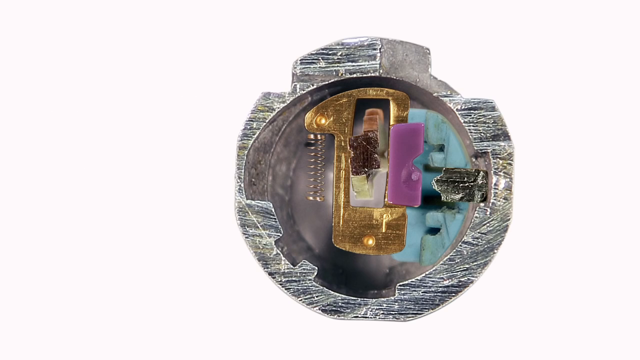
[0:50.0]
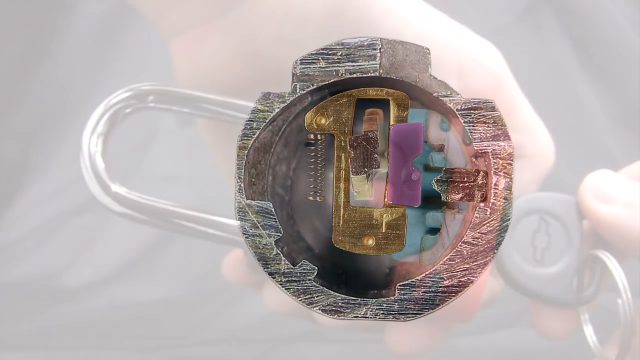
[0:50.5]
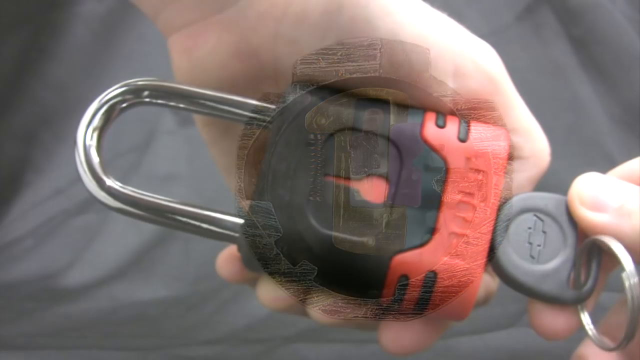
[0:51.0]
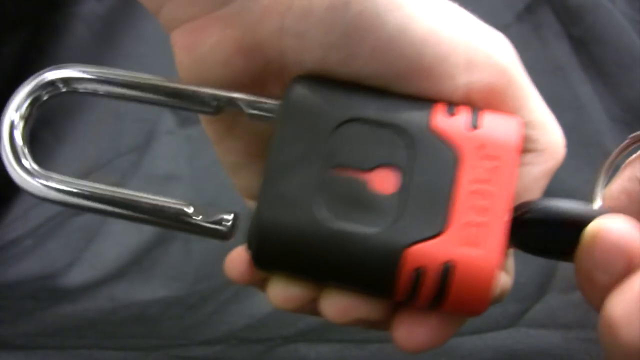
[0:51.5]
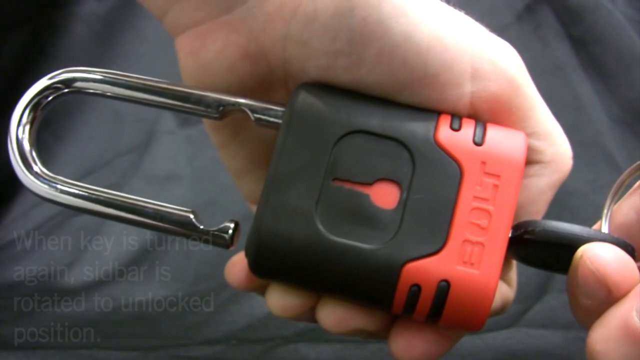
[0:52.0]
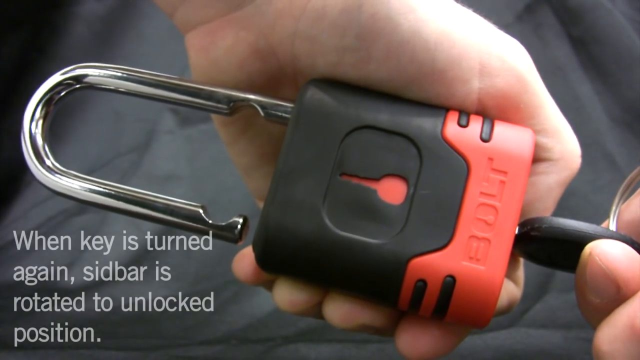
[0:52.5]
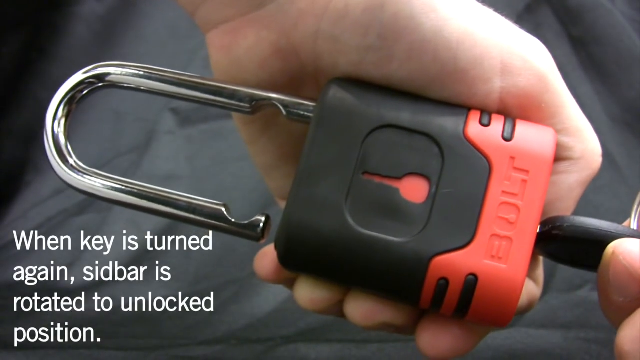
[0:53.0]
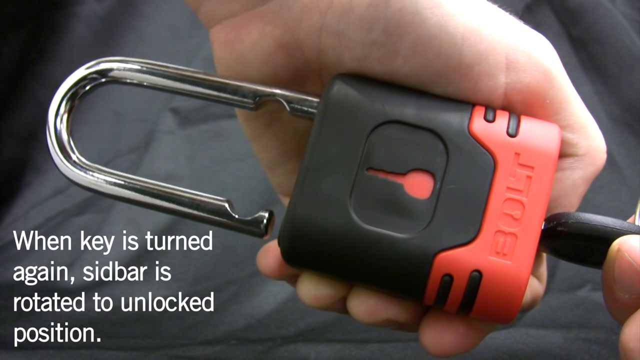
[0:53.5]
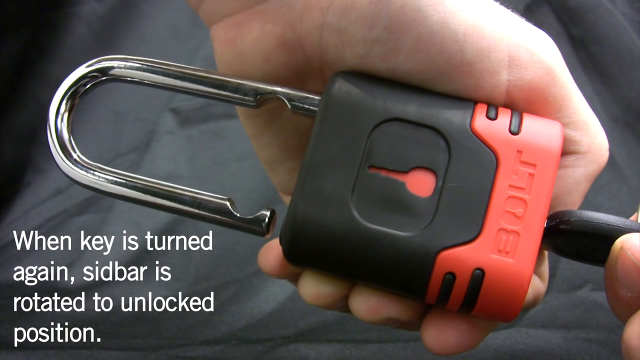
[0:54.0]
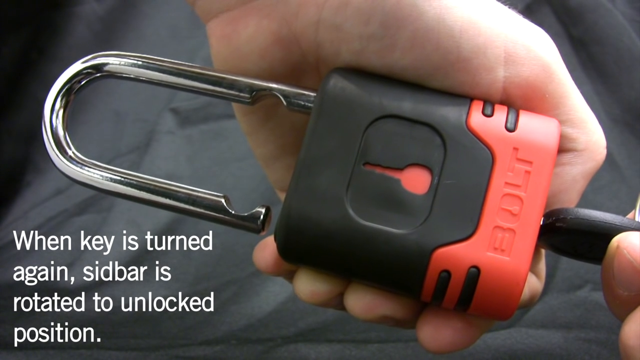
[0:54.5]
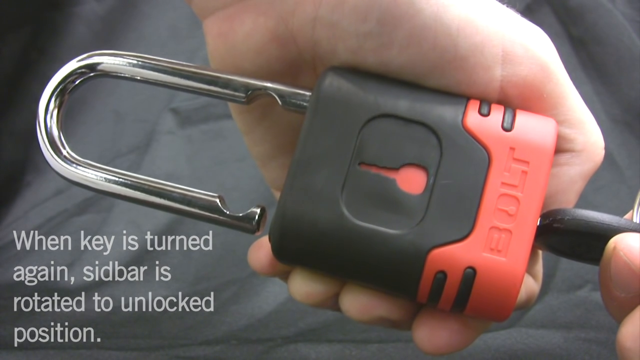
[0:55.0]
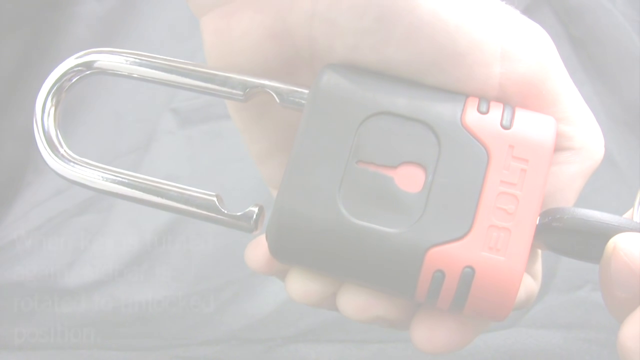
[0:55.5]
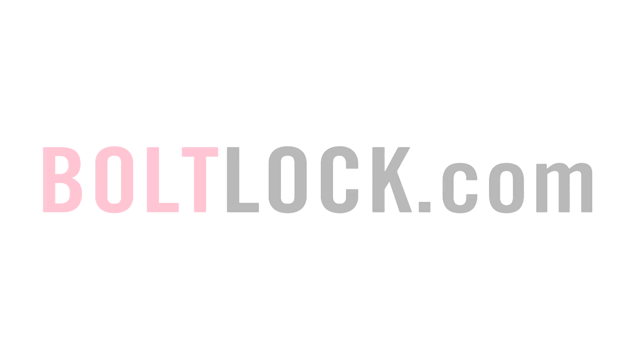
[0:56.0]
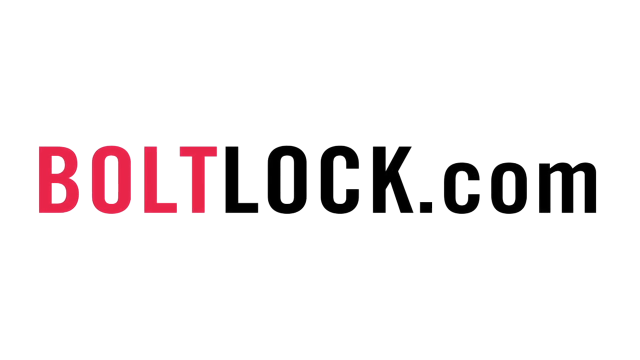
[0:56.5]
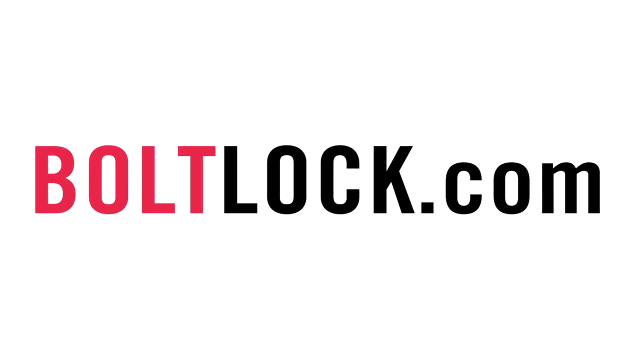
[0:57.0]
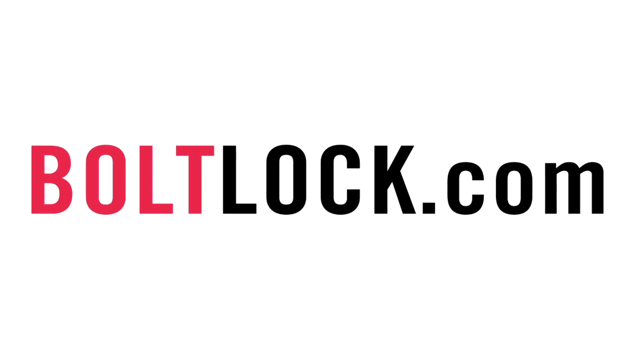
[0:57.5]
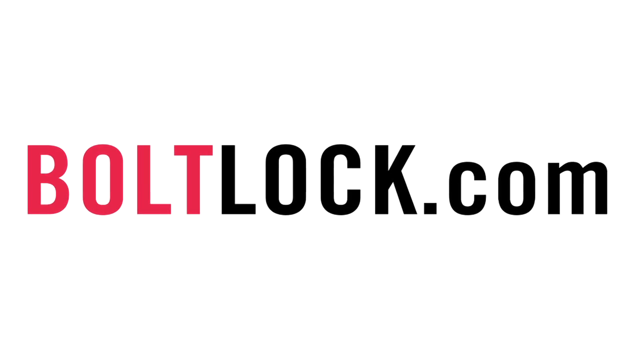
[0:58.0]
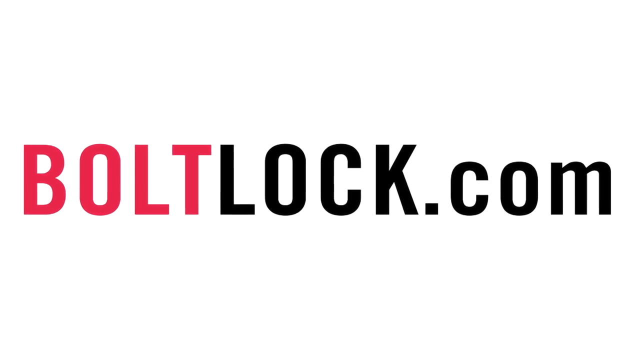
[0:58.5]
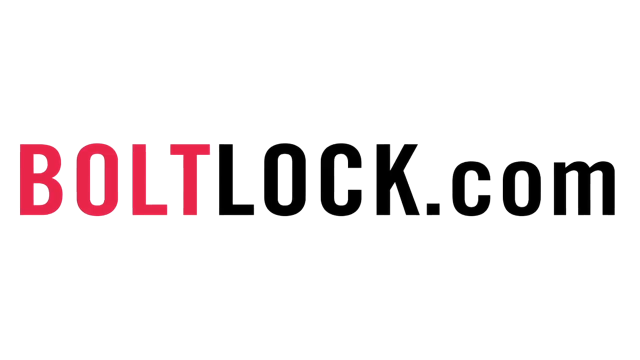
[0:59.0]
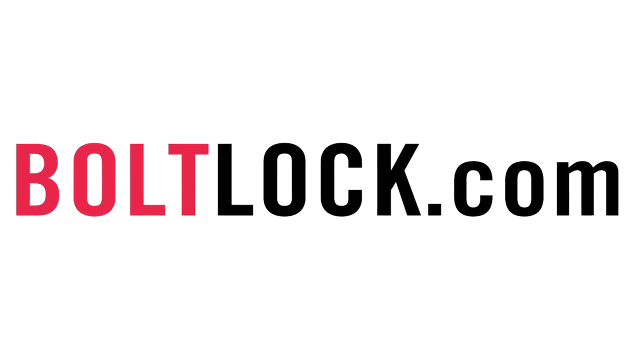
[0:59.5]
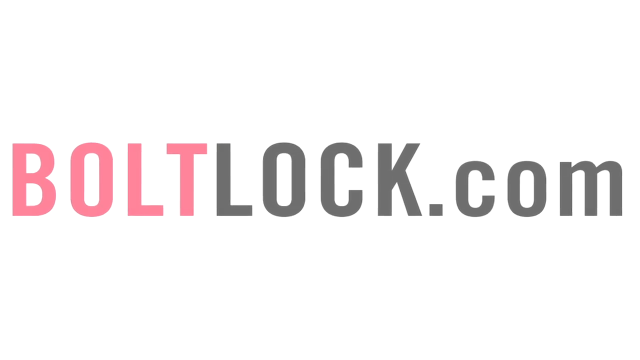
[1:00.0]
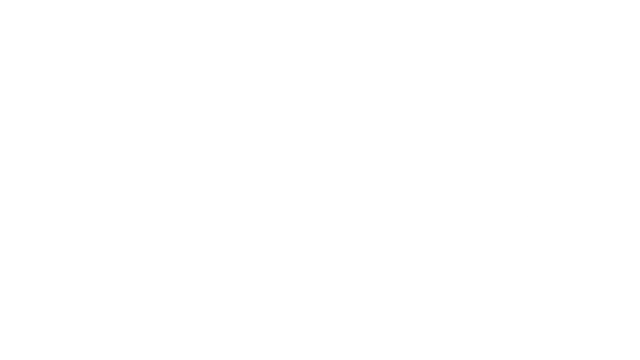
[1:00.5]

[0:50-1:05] A real lock is locked in real time, with the BOLT lock's key inserted and turned while held in the user's hand. Text in the bottom left reads "when the key is turned again the sidebar is rotated to unlock position". The video then shows "boltlock.com" on a white background, with "bolt" in red and the rest in black.